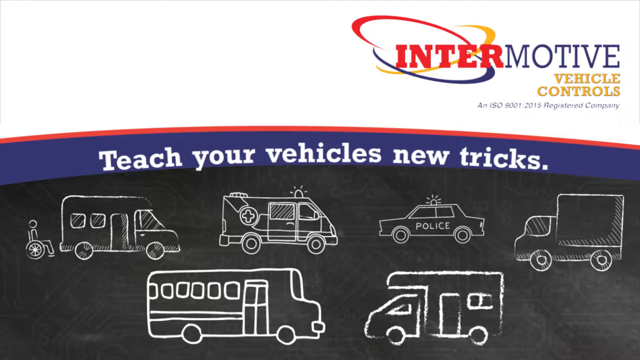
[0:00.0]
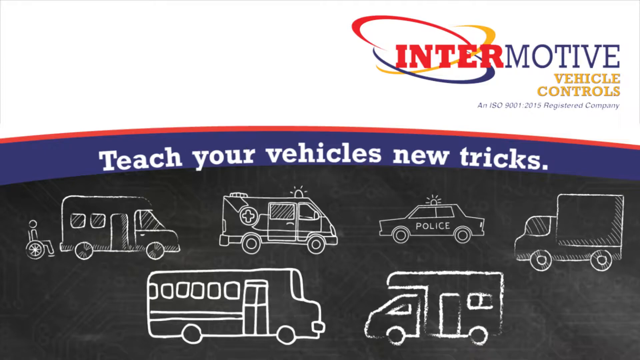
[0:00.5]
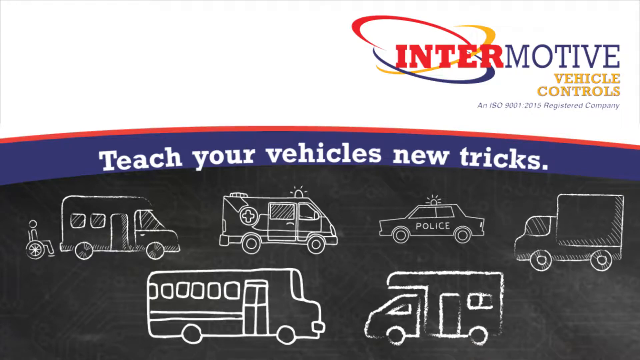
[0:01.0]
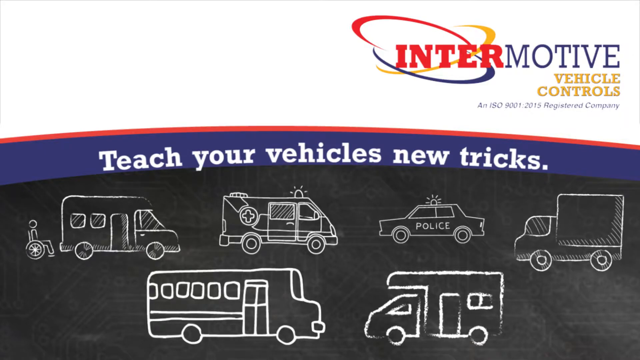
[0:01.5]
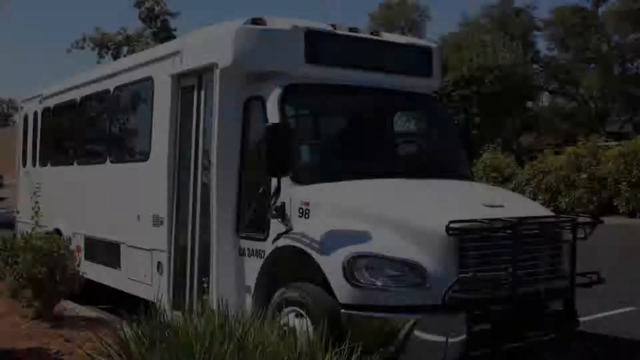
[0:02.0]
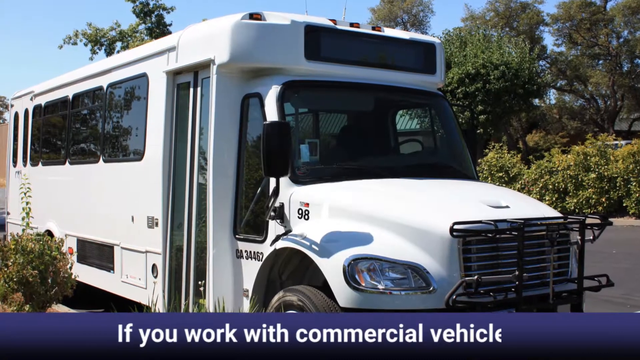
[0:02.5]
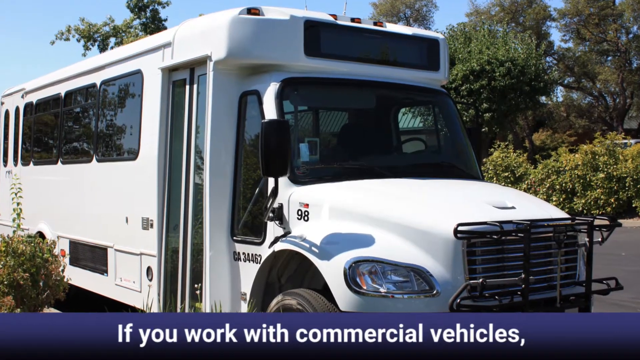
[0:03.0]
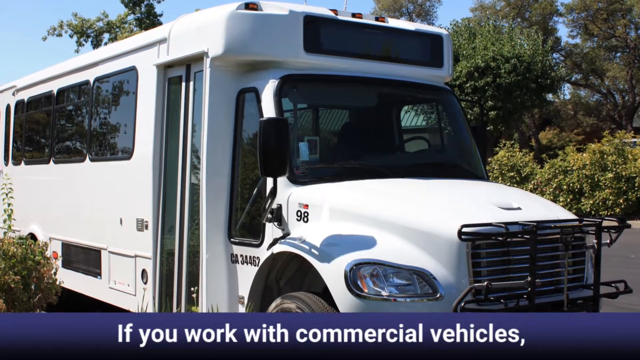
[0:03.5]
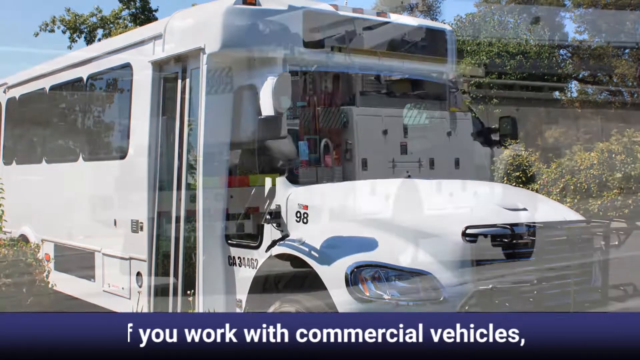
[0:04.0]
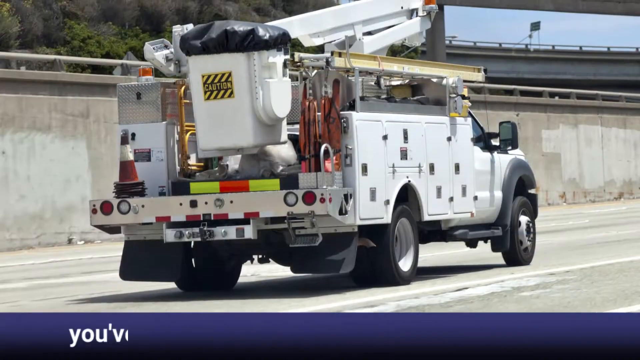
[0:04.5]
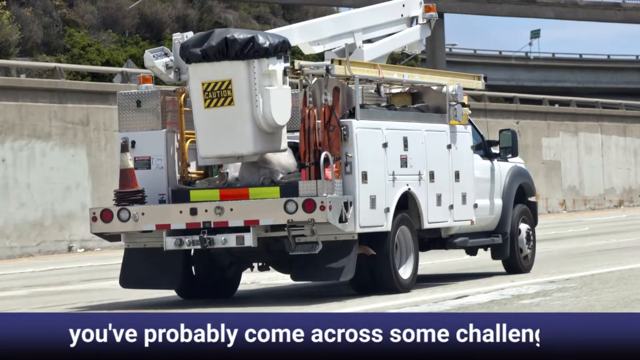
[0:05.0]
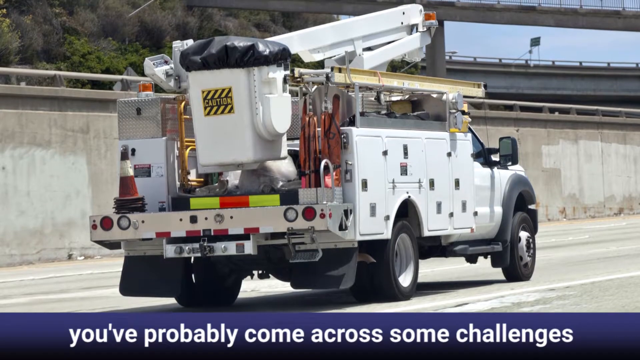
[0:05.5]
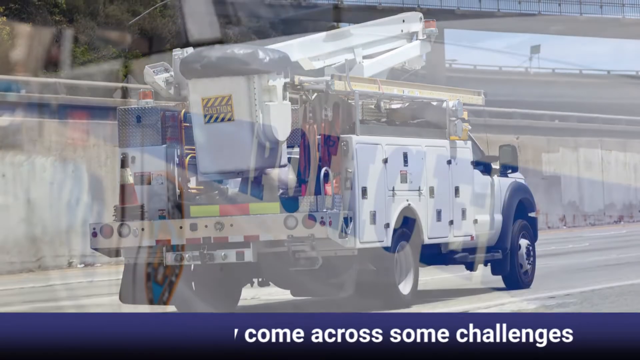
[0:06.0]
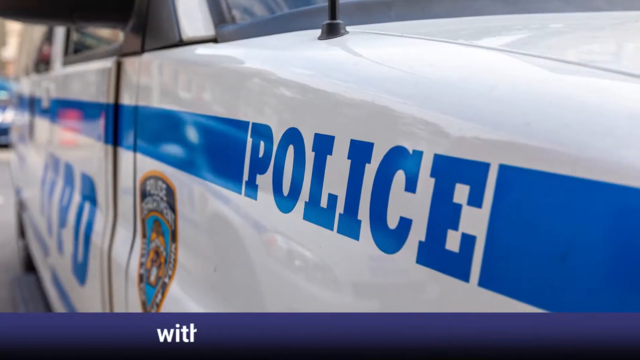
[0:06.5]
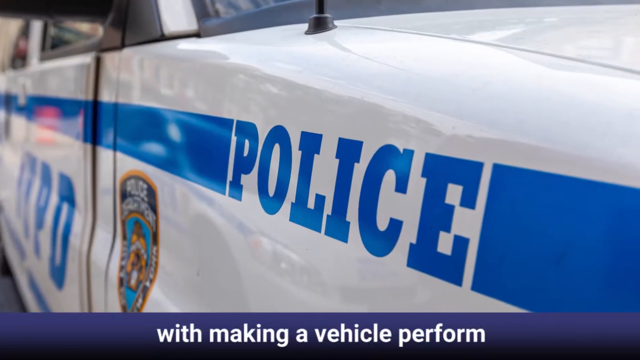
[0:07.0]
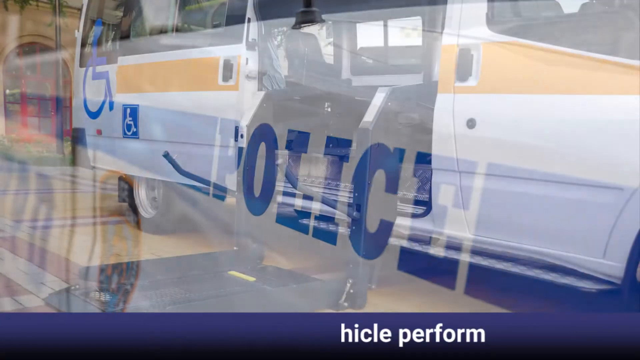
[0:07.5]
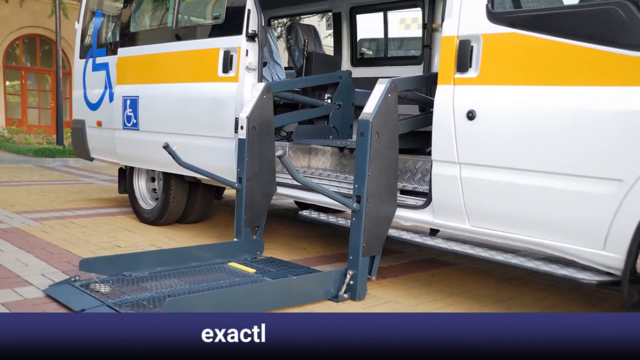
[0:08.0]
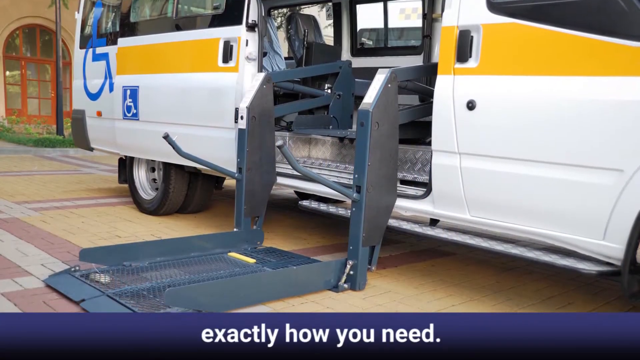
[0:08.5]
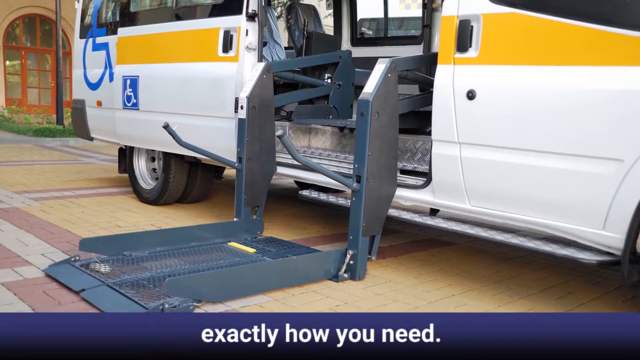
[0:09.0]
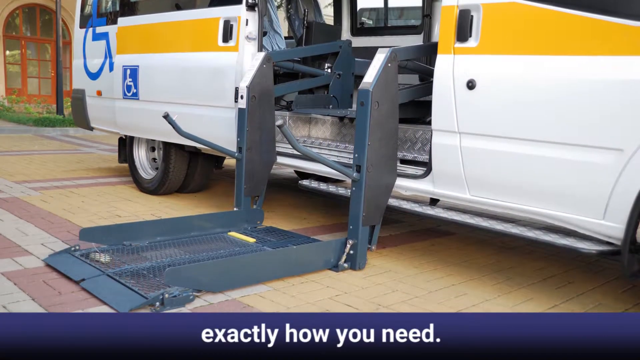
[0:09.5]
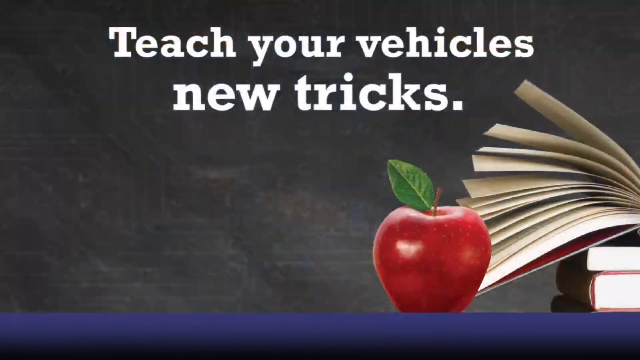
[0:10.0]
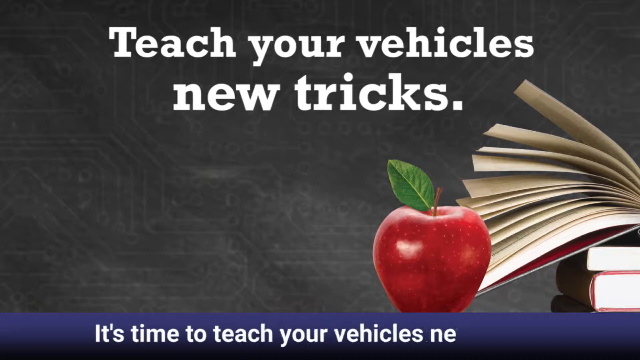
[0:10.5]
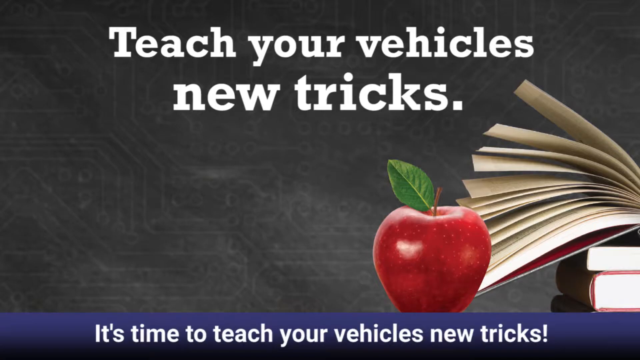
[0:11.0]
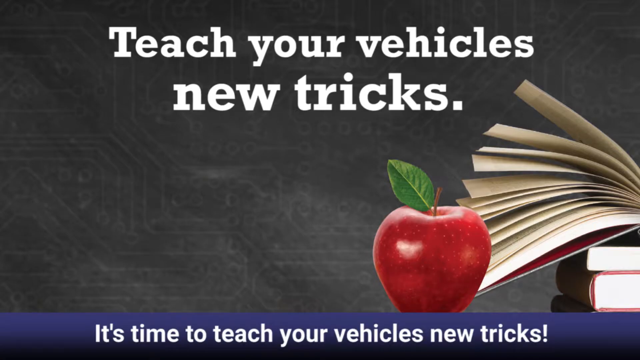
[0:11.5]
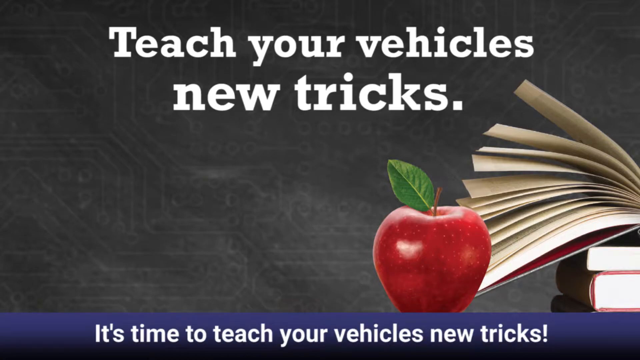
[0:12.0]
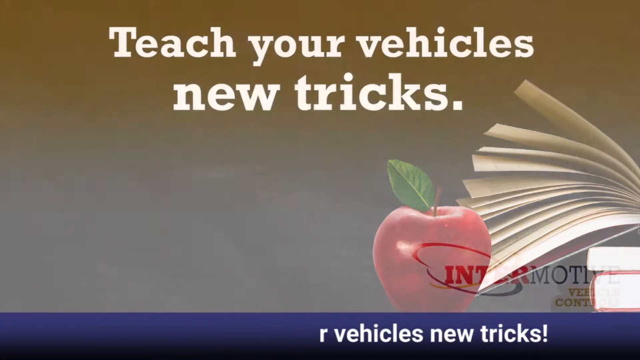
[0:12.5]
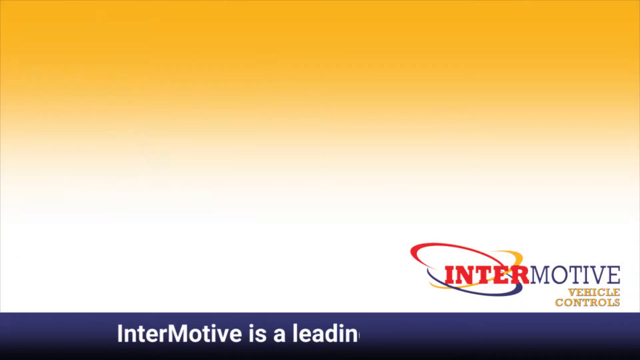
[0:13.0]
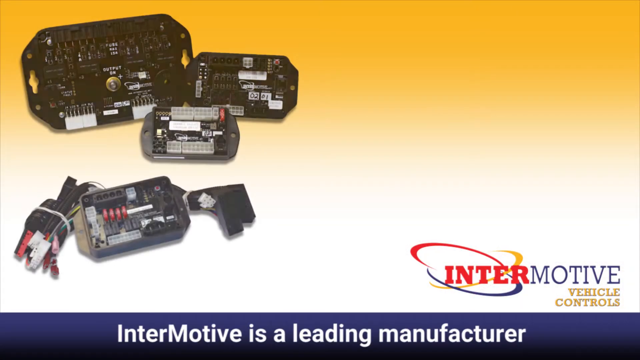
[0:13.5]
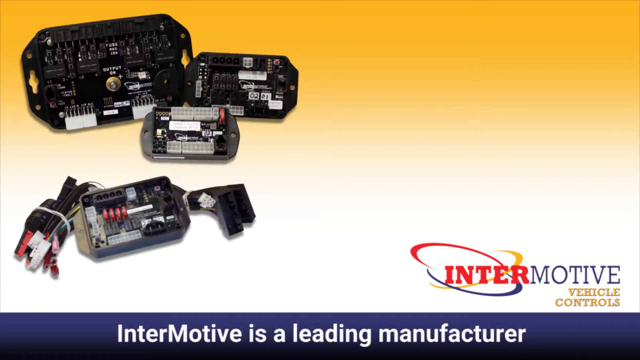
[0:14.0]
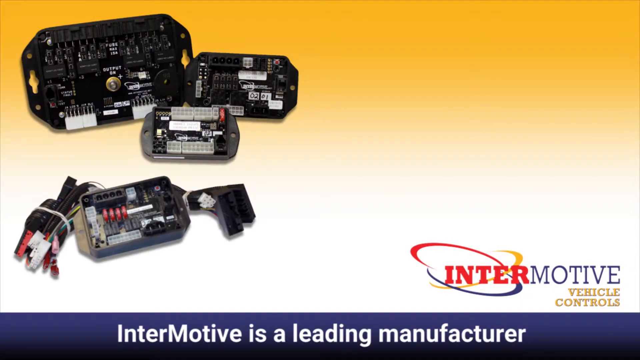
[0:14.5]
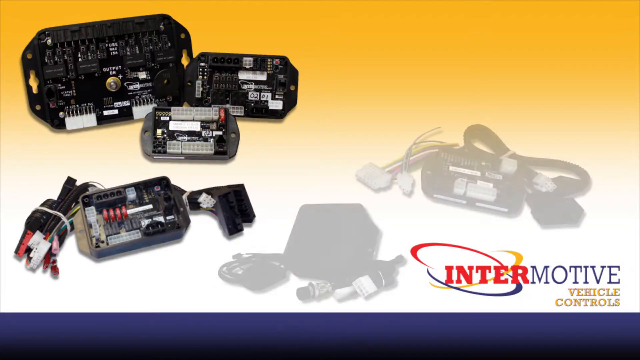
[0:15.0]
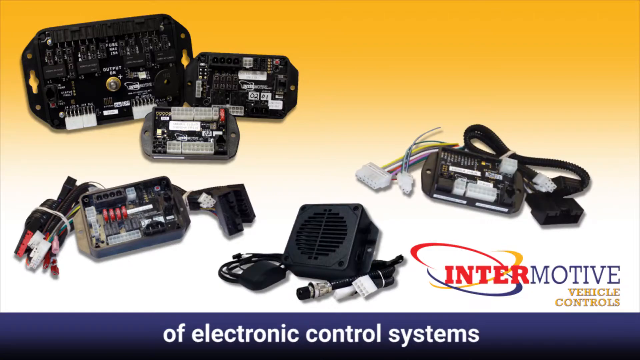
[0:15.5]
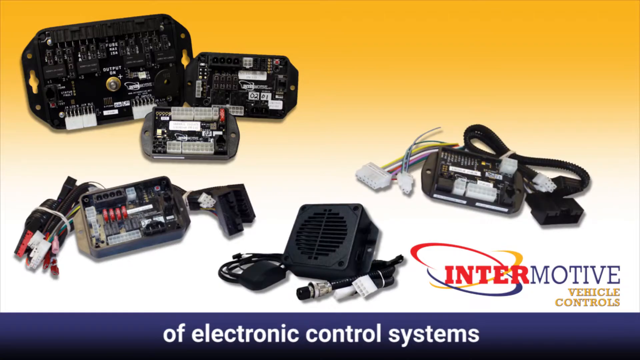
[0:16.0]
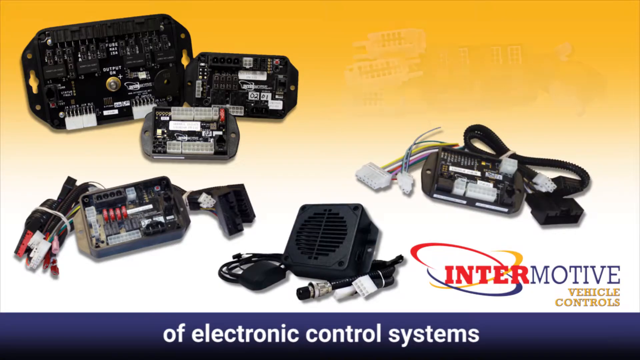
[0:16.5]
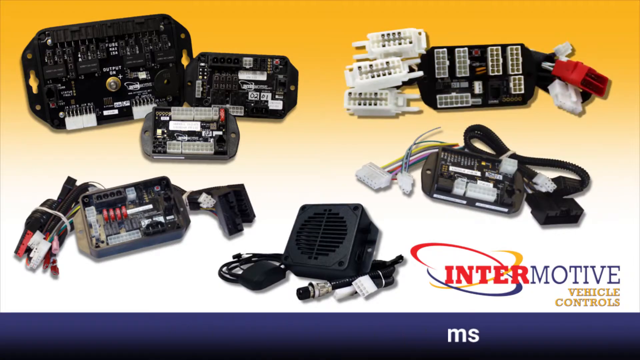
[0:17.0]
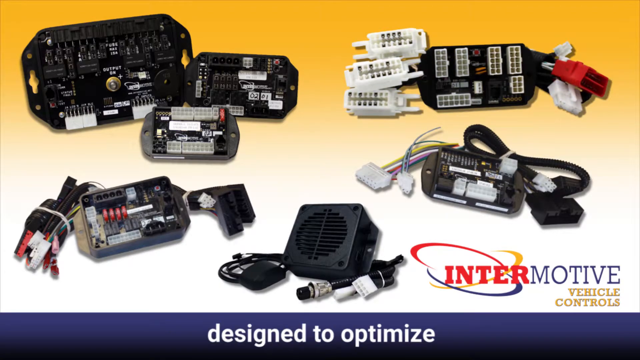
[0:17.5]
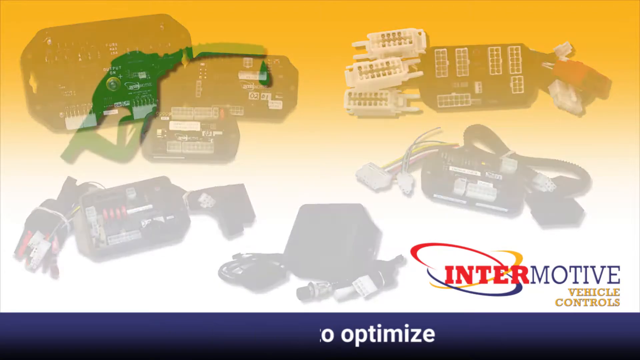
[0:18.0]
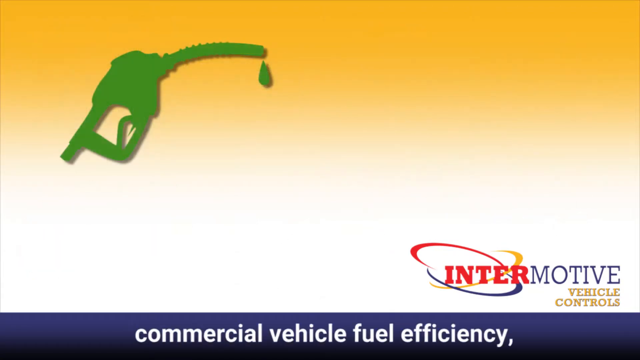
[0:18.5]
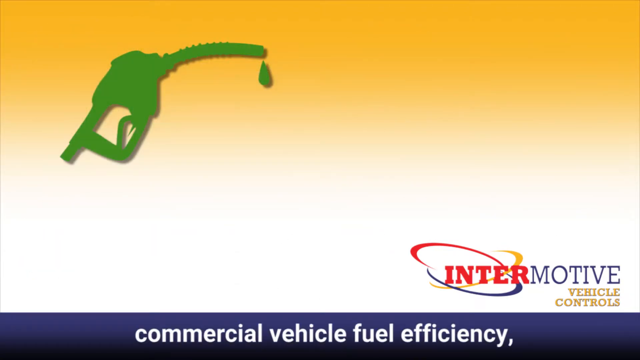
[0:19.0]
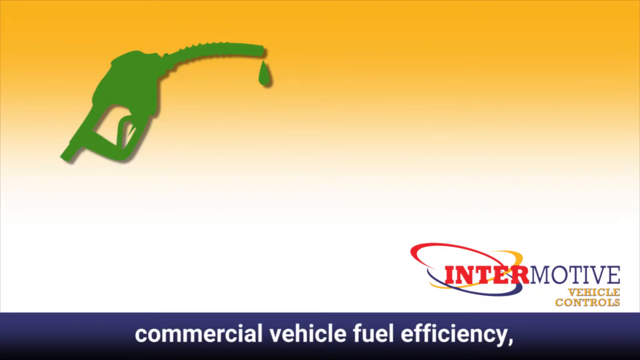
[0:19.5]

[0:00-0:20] The video is about emergency vehicles. The top third of the frame is a white background with, in the right corner, big bold red letters reading "Inter," then blue letters reading "Motive," smaller gold letters reading "Vehicle Controls," and very small blue text reading "an ISO 9001 2015 registered company." Below that are a thin red border and a slightly thicker blue border with white text reading "teach your vehicles new tricks." From there down is what looks like a gray chalkboard with vehicles on it: a wheelchair, then a van, and going right, an ambulance, both facing right; facing left are a police car and what looks like a carrier truck with a big square box on the back. At the bottom are a school bus and a truck with a big square back whose top comes over the roof. The video cuts to a small white bus facing forward to the right, with blue sky across the top, some trees on the right side, a little bush in the left corner, gray concrete, and a big black grill on the front of the bus. Text reads "if you work with commercial vehicles" as the view slowly pans in. Next the view is behind a truck that apparently works for an electric company, with a big crane on the back; the view shows the back of it and down the passenger side as it travels on the interstate, with a big concrete barrier visible. White text reads "you've probably come across challenges." A close-up shows the passenger fender of a white police car with "police" on it and a blue stripe down it, slowly zooming in. An emergency vehicle has a wheelchair chairlift coming out of its side, seen from the left front end. More text runs across the bottom. Then a black background that looks like a chalkboard shows open books on three books in the bottom right corner, a red apple to the left of them, and bold white text reading "teach your vehicles new tricks," with more text across the bottom. Next is a yellow background with little electronic-looking devices: some in the top right corner, one in the bottom left, one in the center at the bottom that looks like a CB, another to the right of it, and another in the top right corner. There is a green gas handle on the yellow background.